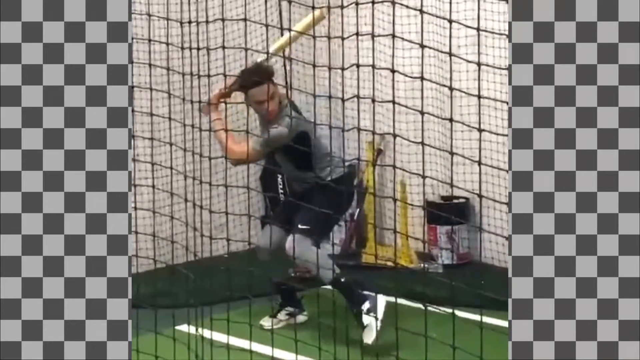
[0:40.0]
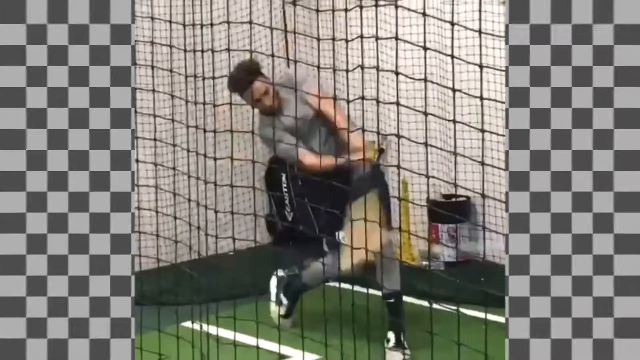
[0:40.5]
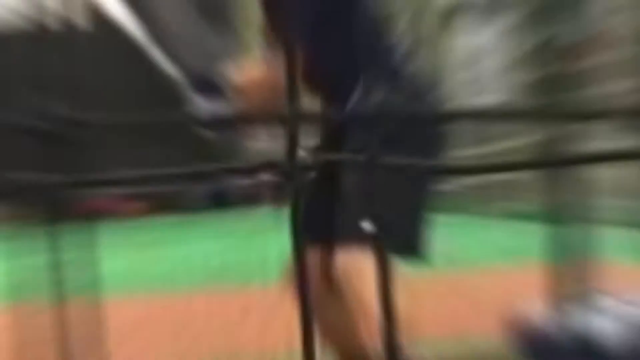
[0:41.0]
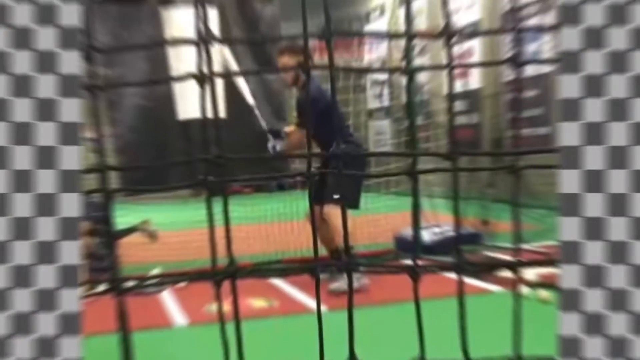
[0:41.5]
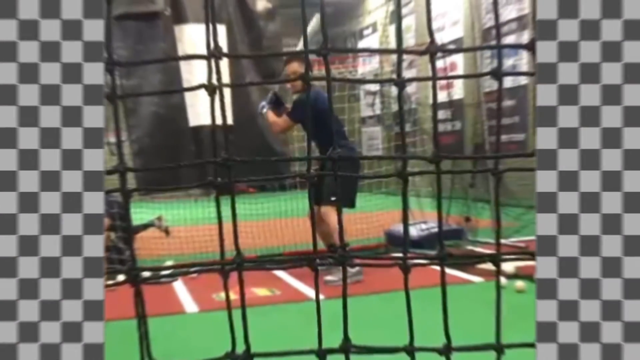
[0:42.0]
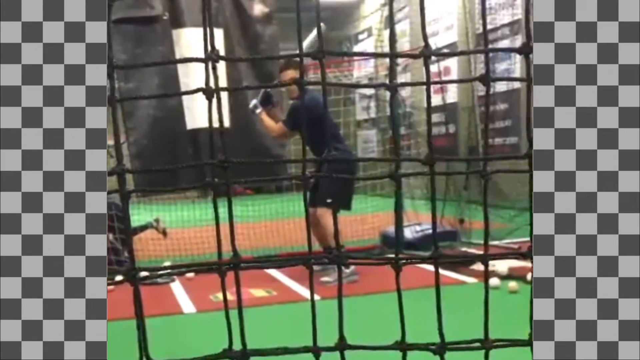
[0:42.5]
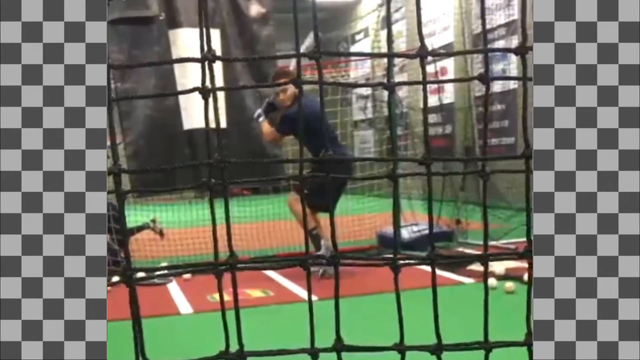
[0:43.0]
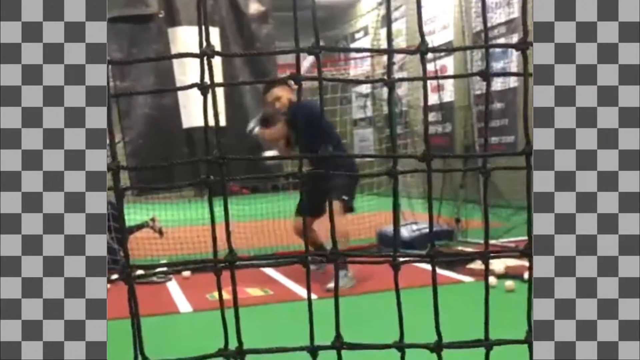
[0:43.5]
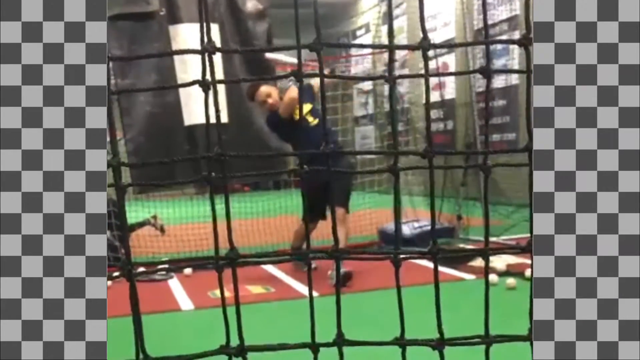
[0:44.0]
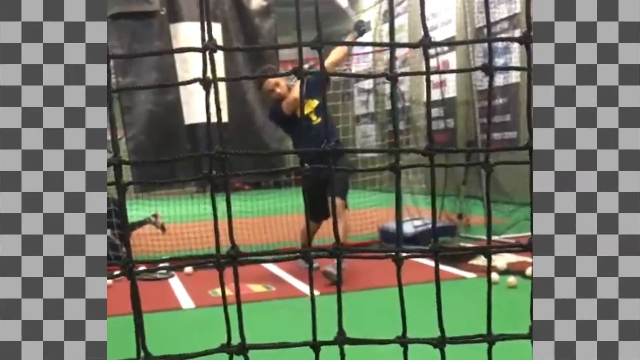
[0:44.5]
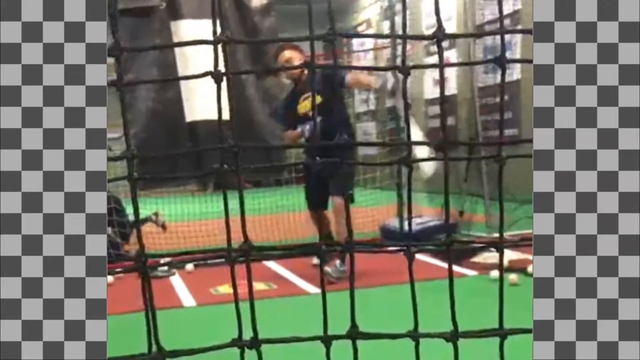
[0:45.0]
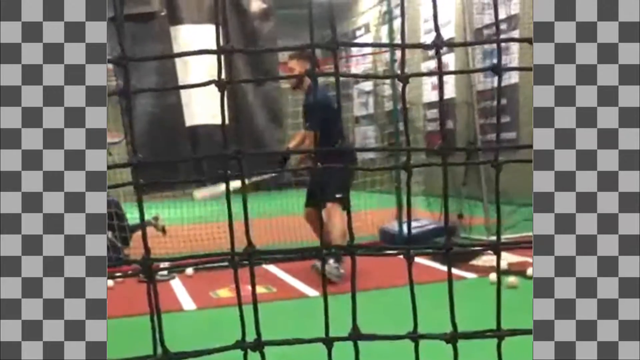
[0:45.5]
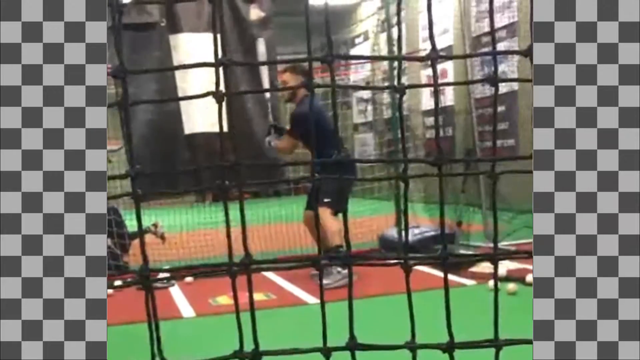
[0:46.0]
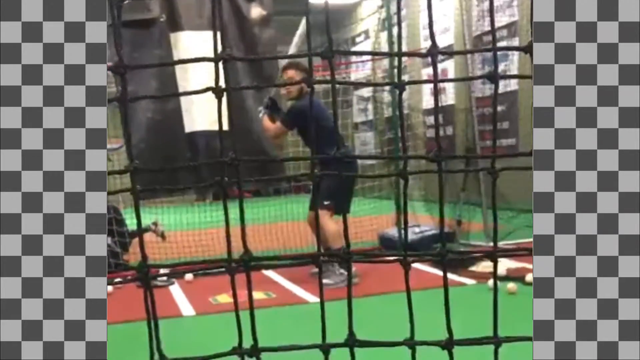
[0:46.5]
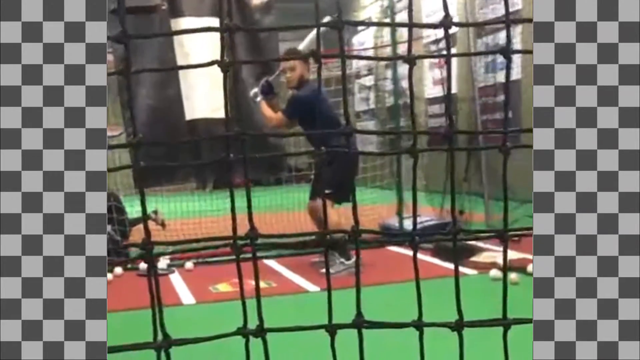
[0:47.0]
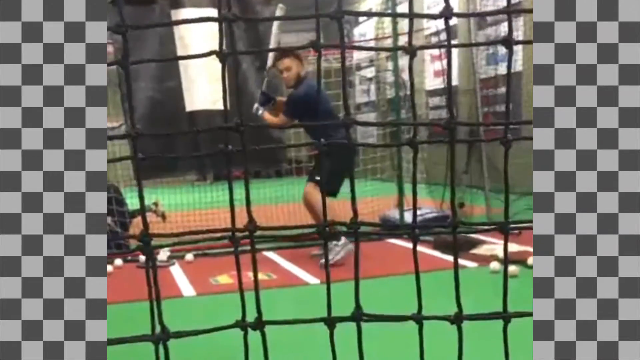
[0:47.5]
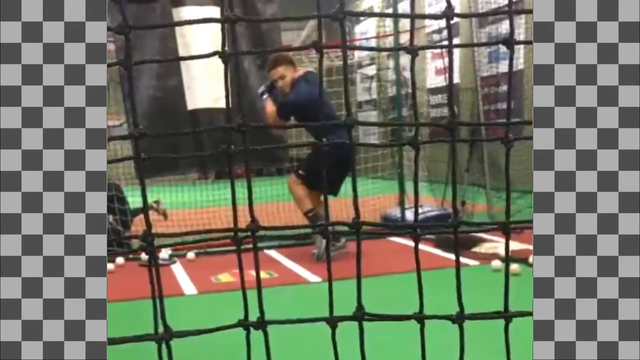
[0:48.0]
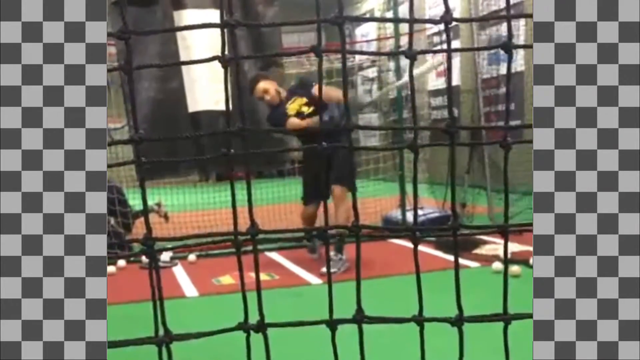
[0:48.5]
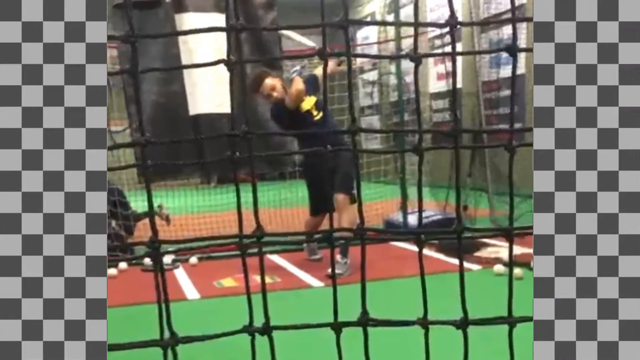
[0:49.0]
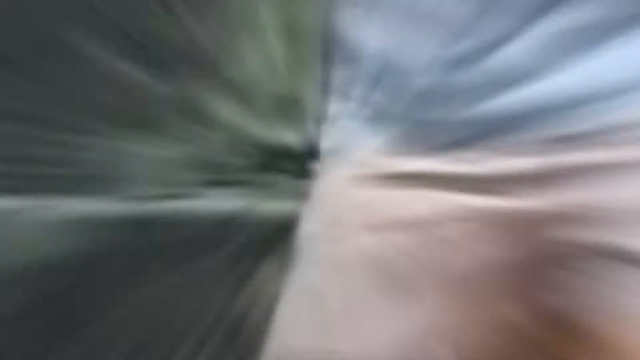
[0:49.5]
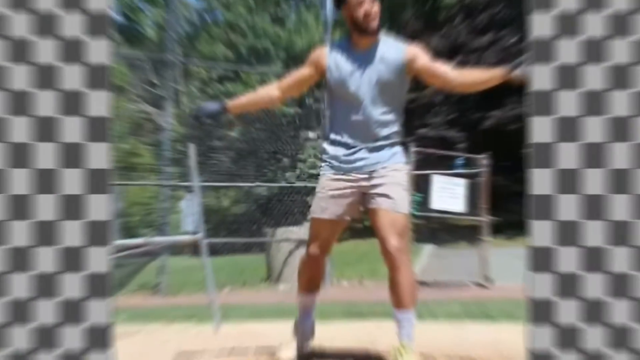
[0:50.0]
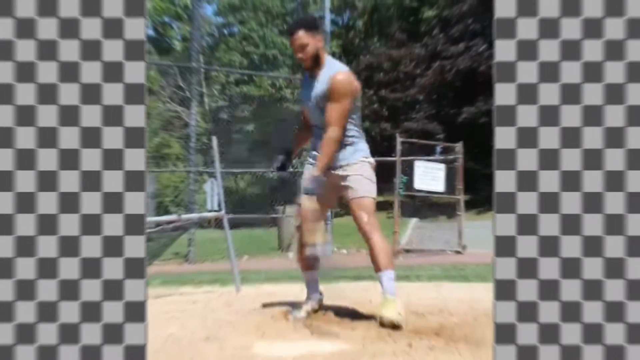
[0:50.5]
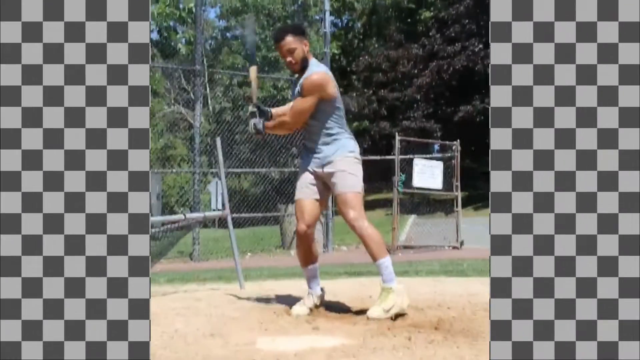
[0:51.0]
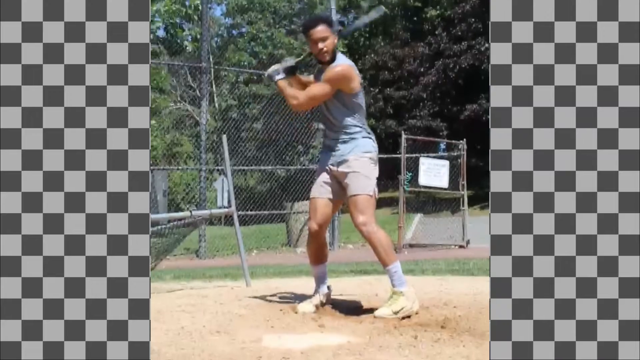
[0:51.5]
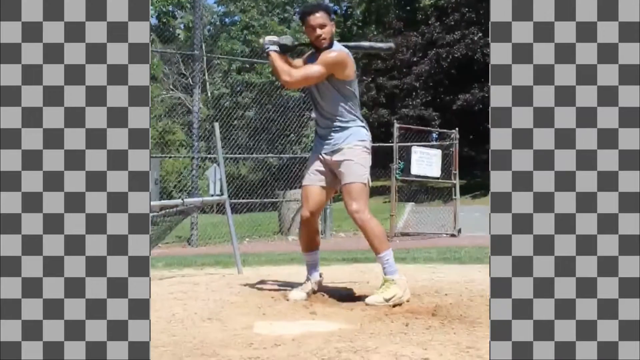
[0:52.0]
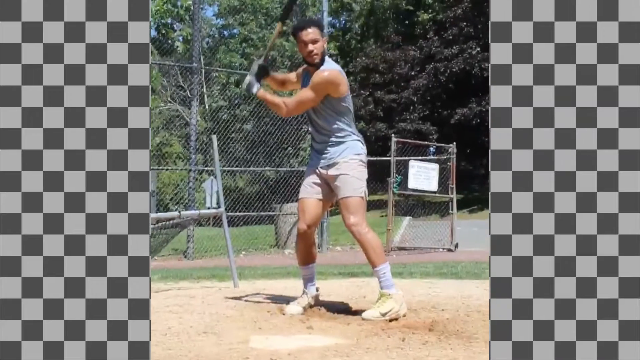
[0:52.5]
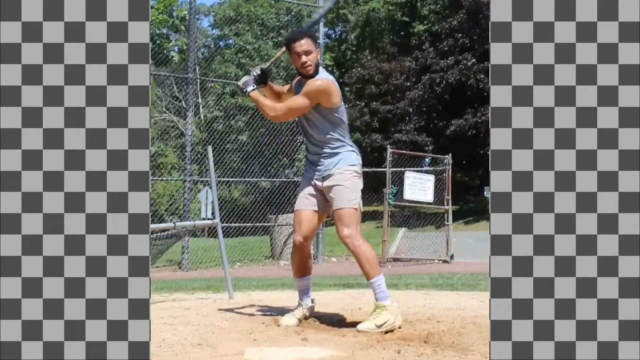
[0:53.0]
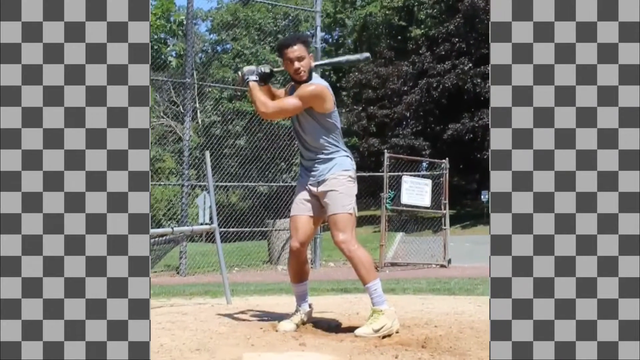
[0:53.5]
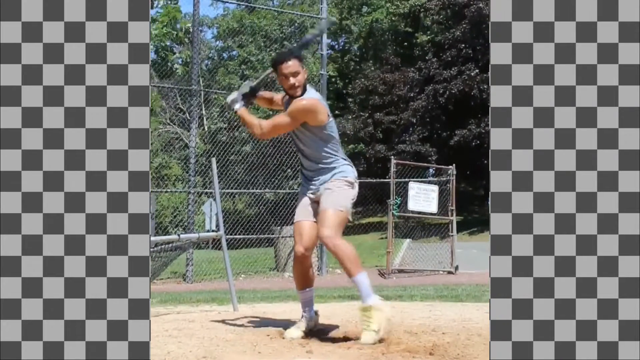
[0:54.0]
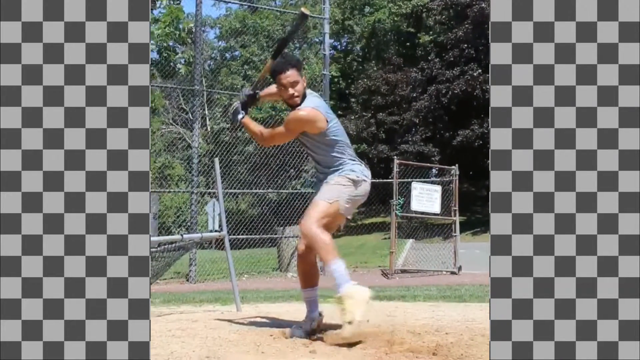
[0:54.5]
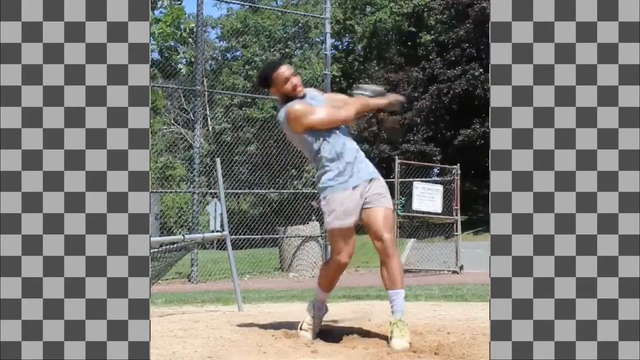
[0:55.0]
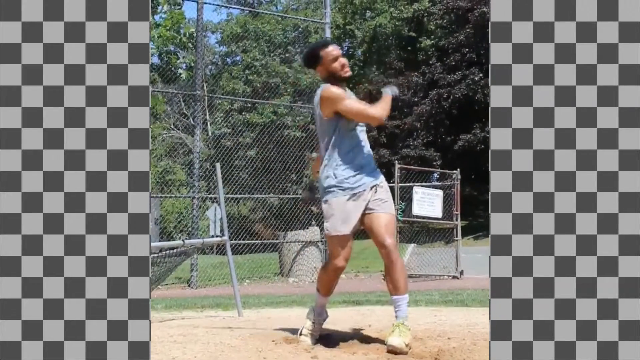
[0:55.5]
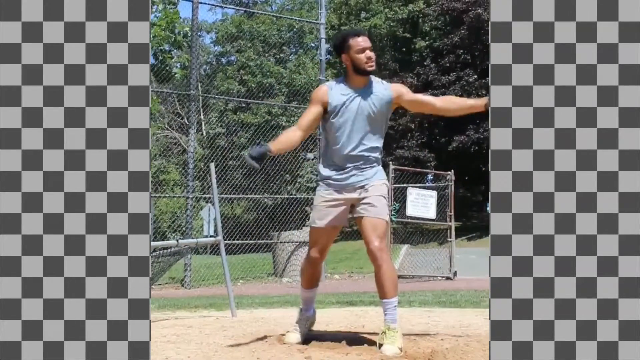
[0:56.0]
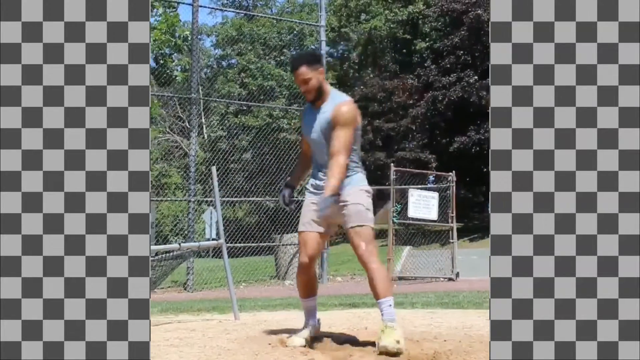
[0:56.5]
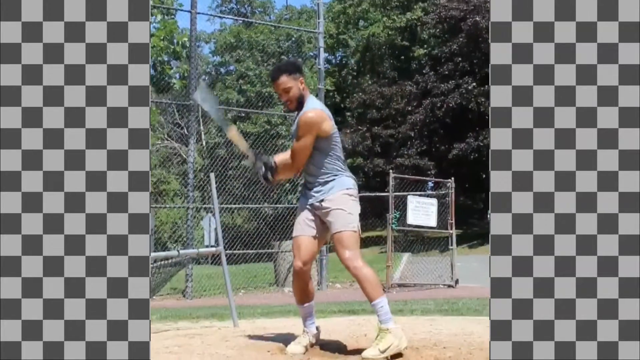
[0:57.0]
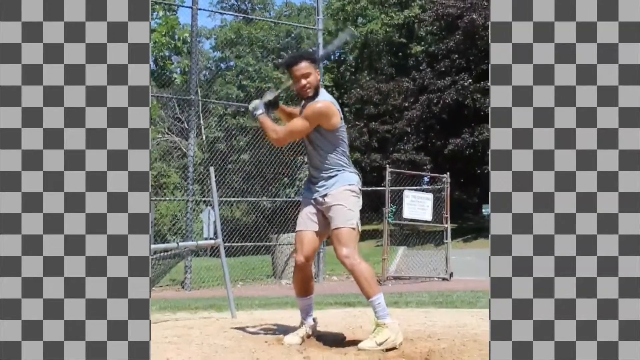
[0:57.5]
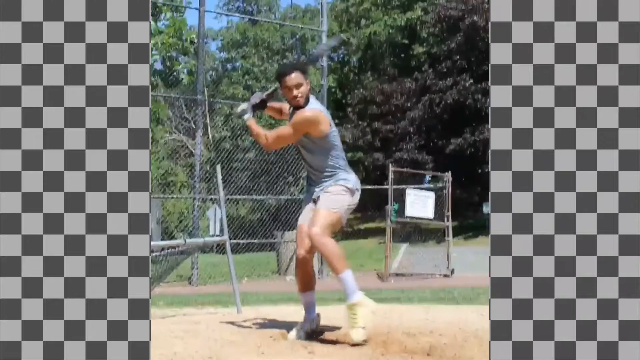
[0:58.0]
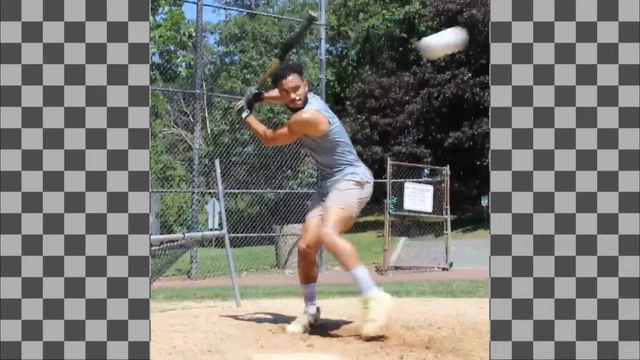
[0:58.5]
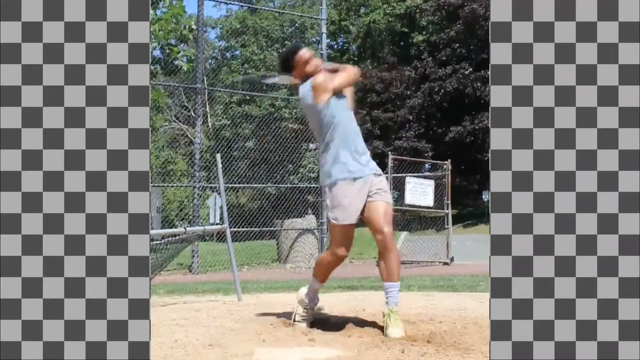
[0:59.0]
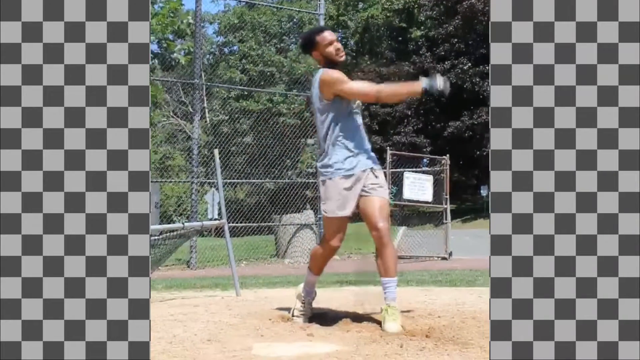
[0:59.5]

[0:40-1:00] A professional baseball player hits a ball inside something like a batting cage, with netting on the side to keep the area and the pitcher safe. The view then zooms in and he is outside, hitting the ball in an outdoor area. As he hits, he winds up, hits the ball, and powers through, hitting it pretty hard. He has curly black hair and a little facial hair, and his arms look built. He wears a bluish tank top.